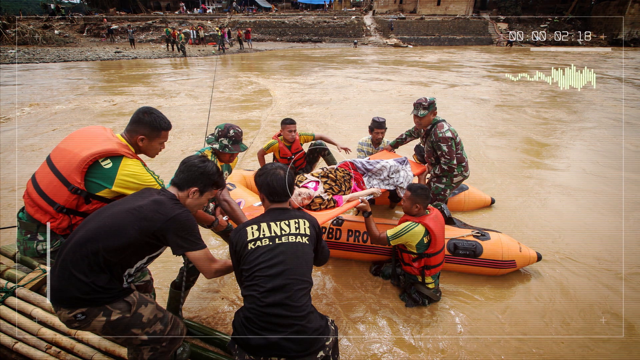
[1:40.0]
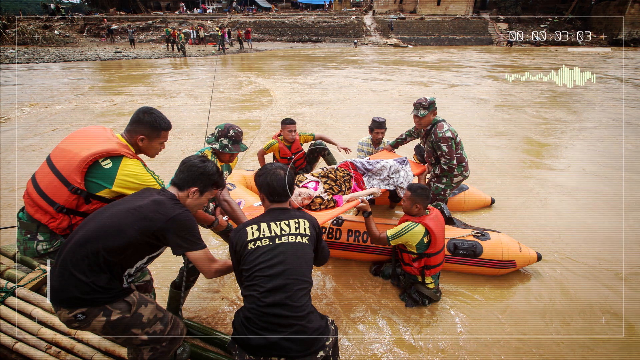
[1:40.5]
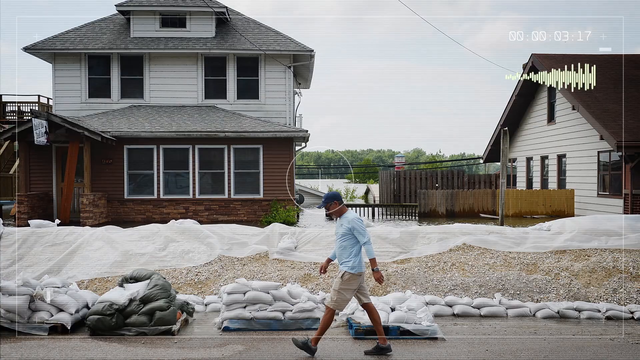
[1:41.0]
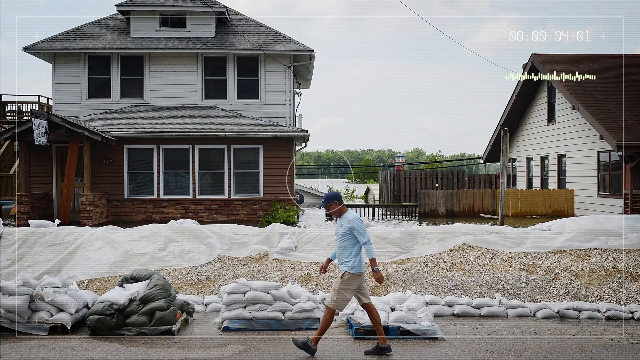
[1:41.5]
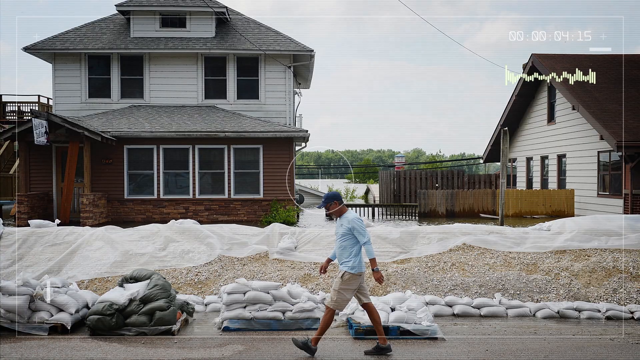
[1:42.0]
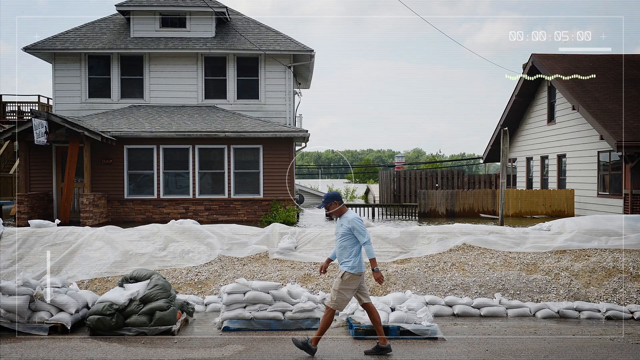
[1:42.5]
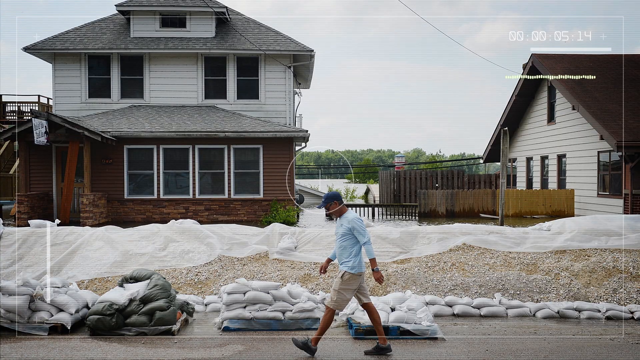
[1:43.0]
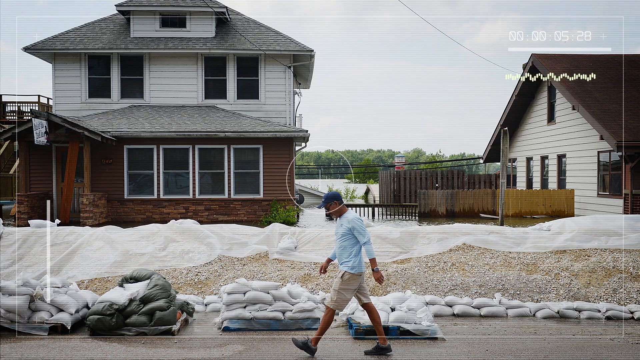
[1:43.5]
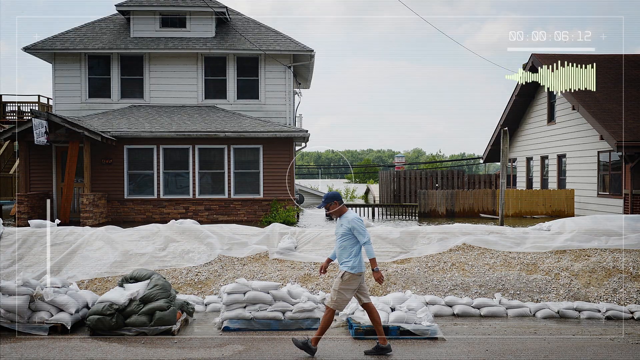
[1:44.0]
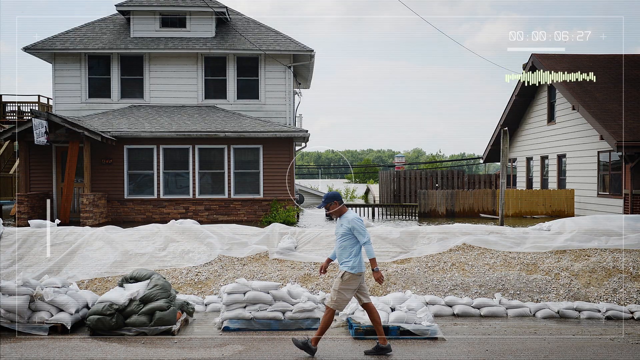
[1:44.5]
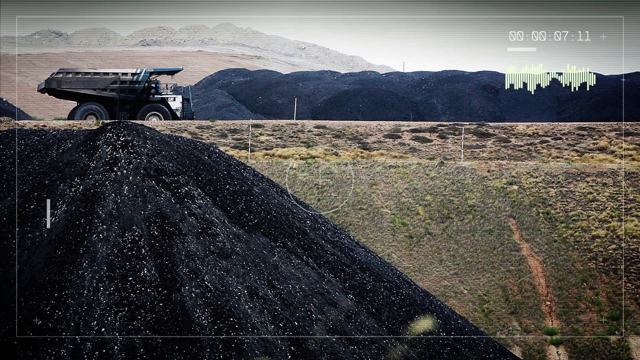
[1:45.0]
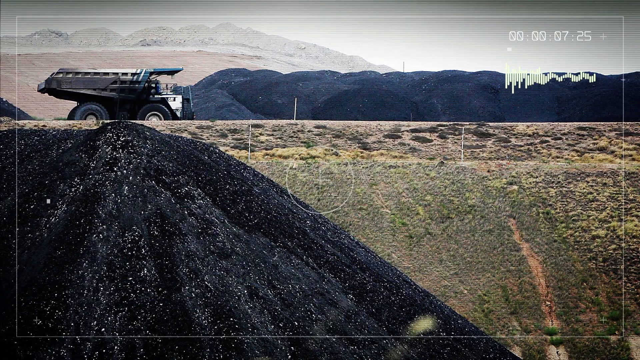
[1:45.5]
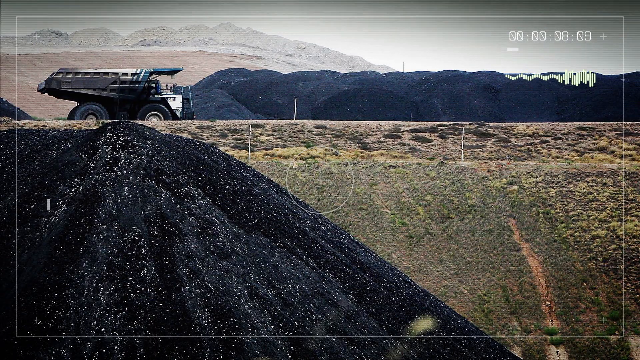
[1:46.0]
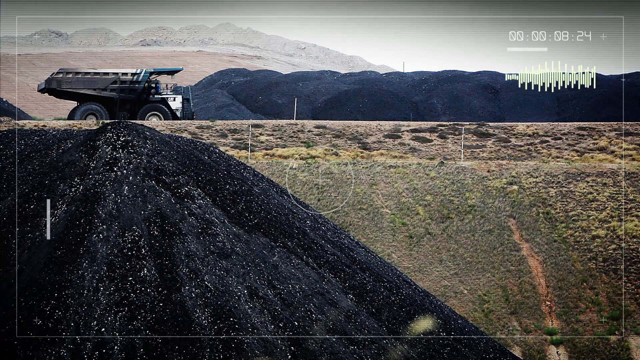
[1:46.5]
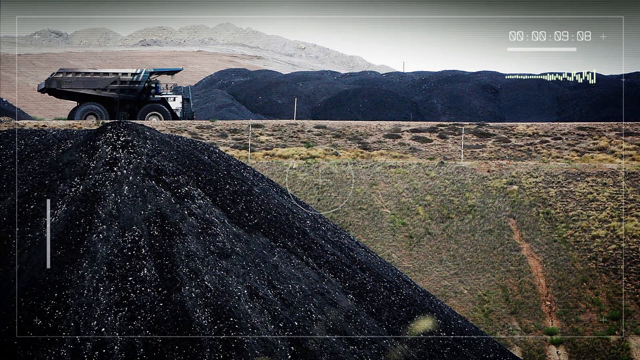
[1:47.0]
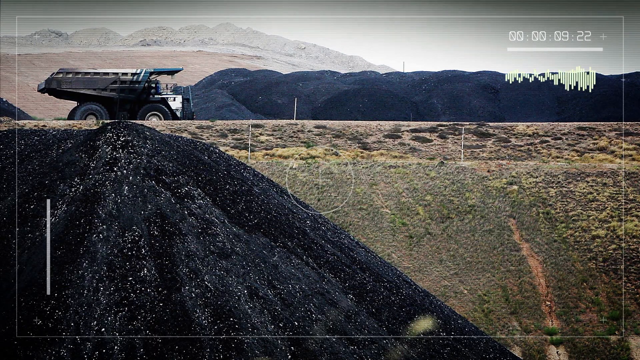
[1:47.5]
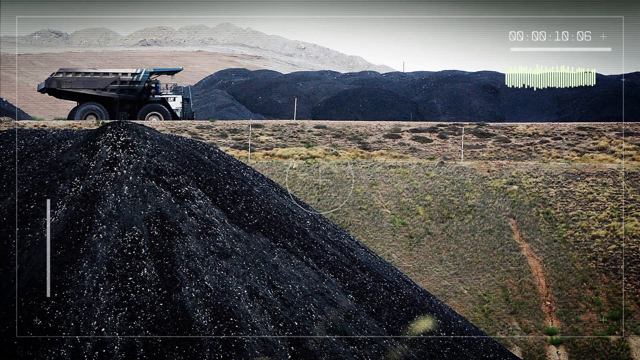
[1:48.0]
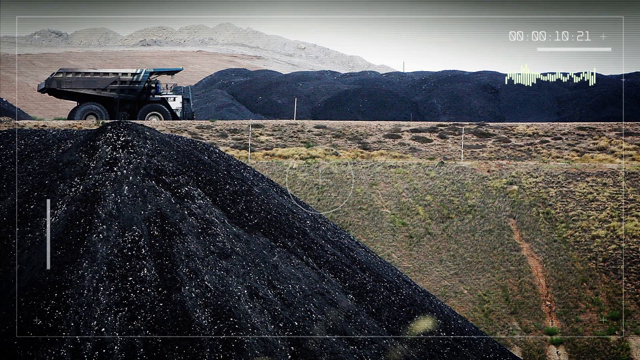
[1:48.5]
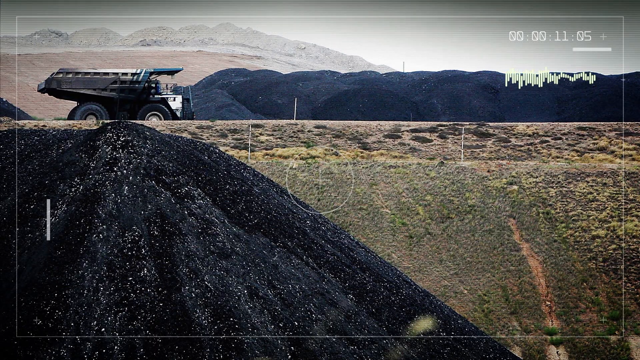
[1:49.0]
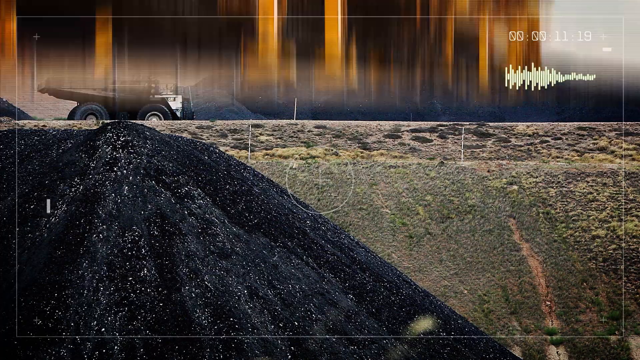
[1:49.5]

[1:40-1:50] A group of men helps with the dead body of a woman who seems to have drowned. A map of the continents affected by these natural disasters is shown. Next, a man takes a walk in what looks like his neighborhood, repeatedly looking down, while bags, apparently of sand or something else, are lined up by the road. A truck at a mining site follows; it is unclear whether it is moving or stationary, and there is a huge pile of black things that look like coal. The scene returns to the men taking the woman's corpse out of the river. Some of the men wear green and yellow T-shirts with reflectors on top, and others wear camouflage, apparently short clothes.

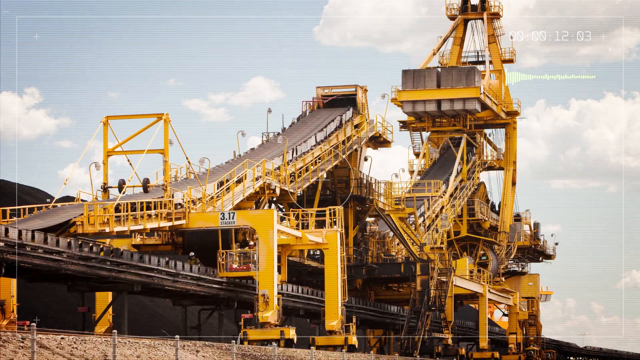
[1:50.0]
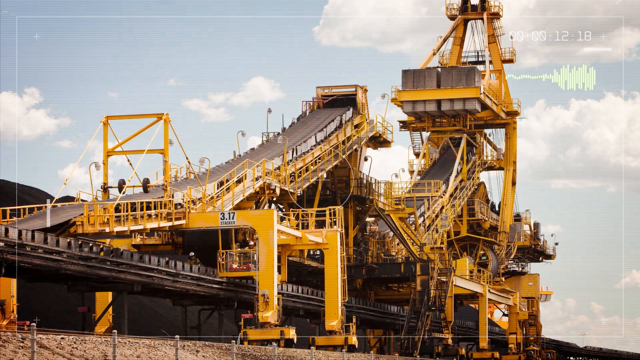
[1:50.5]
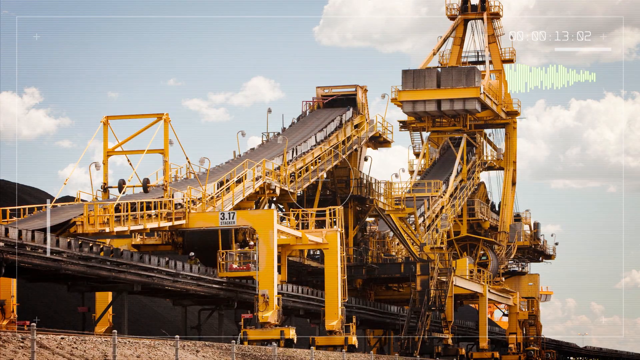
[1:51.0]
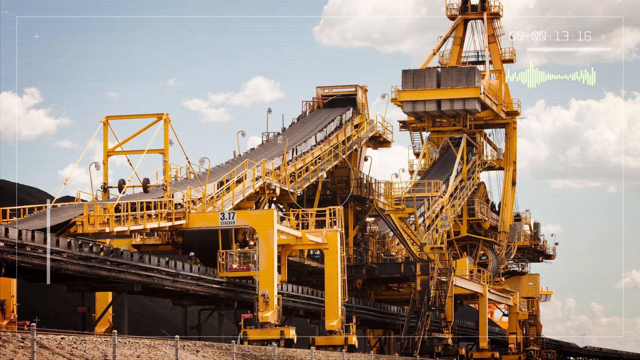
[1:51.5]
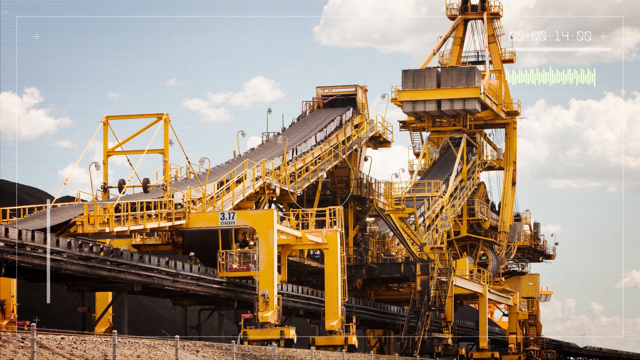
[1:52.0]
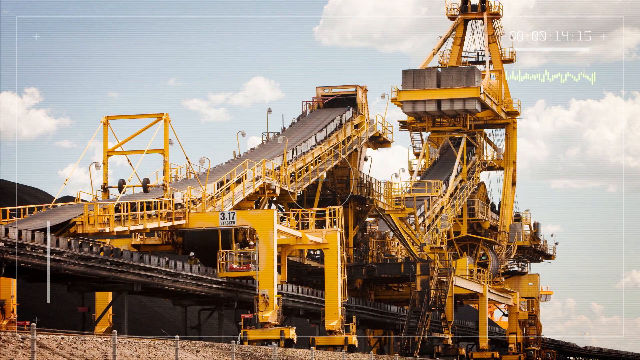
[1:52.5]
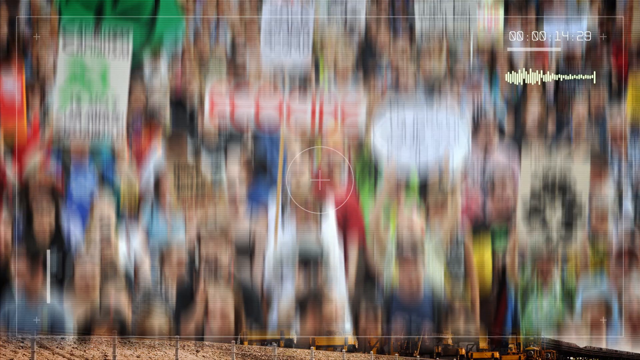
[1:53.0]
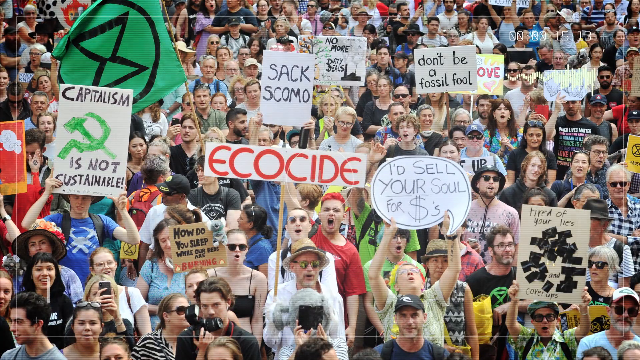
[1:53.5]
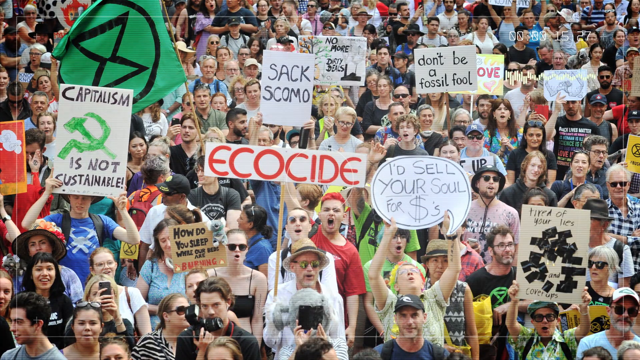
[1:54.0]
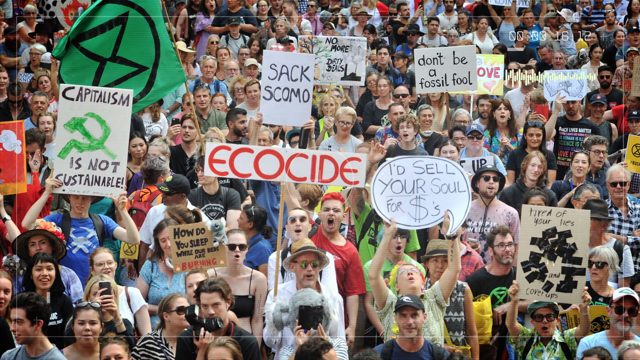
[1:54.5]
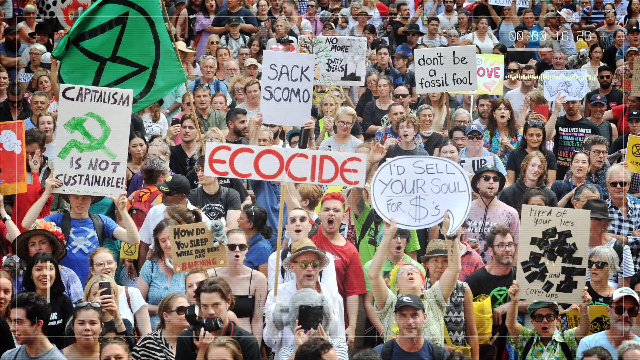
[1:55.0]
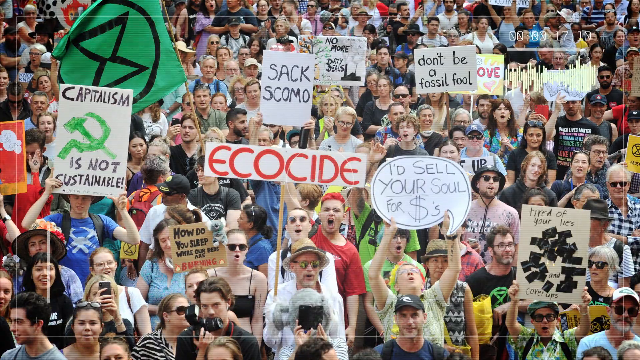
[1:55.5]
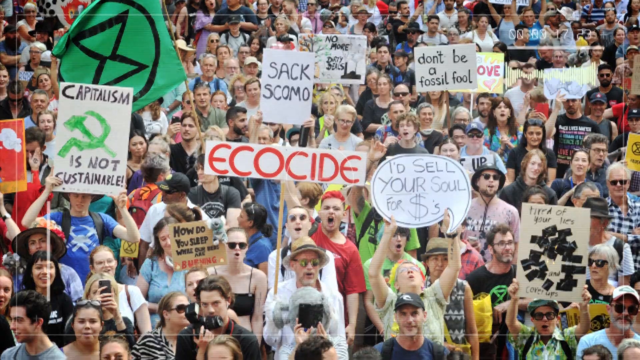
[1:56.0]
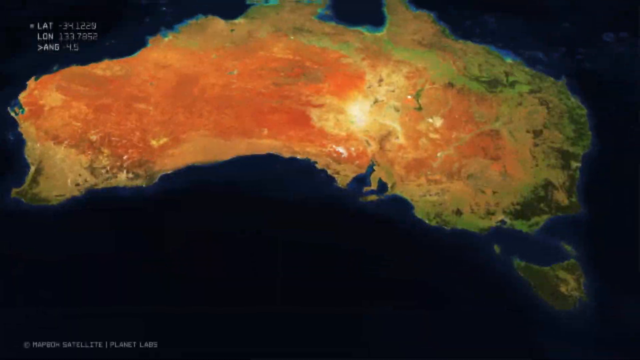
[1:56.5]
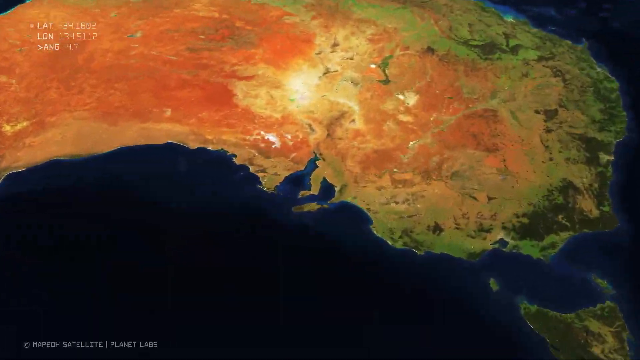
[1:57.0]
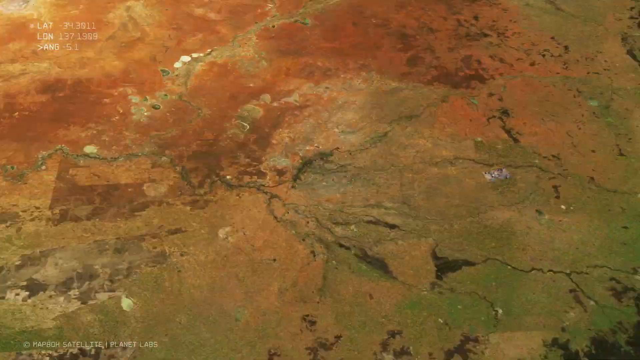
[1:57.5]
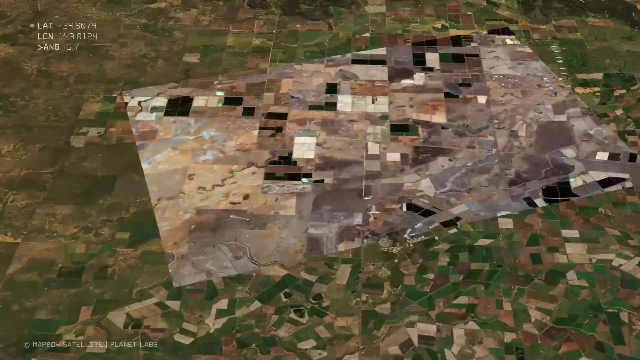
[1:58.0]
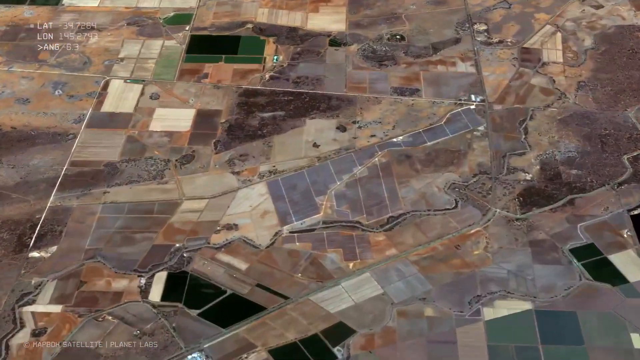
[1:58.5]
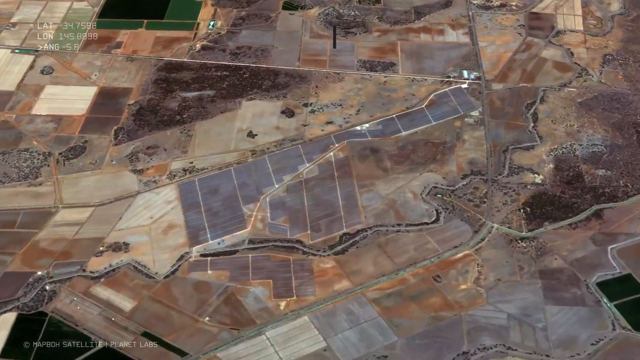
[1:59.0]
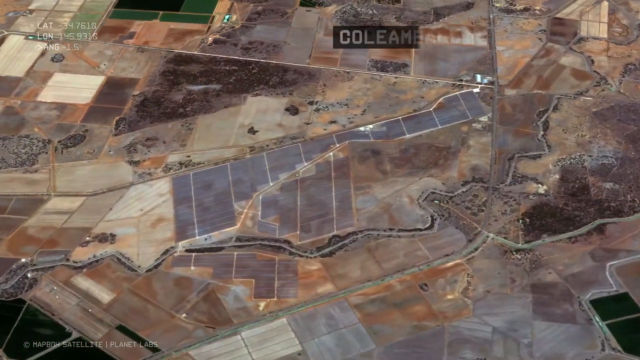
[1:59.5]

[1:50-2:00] The woman's corpse is again seen being taken out of the river. Next comes a big piece of yellow construction-like equipment that appears to have something on it. A group of people campaigning hold different banners reading "capitalism is not sustainable", "eco-cide", "don't be a fossil fool" and "no home, no shelter". There is a big green flag with a circle and something like a clock on it. A location is then zoomed in on.